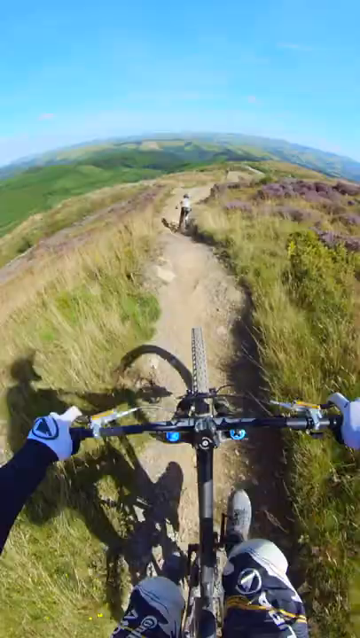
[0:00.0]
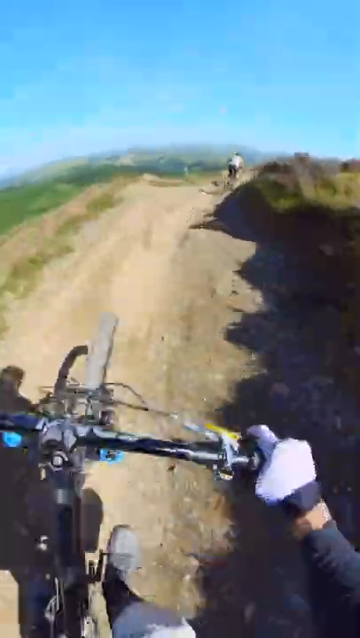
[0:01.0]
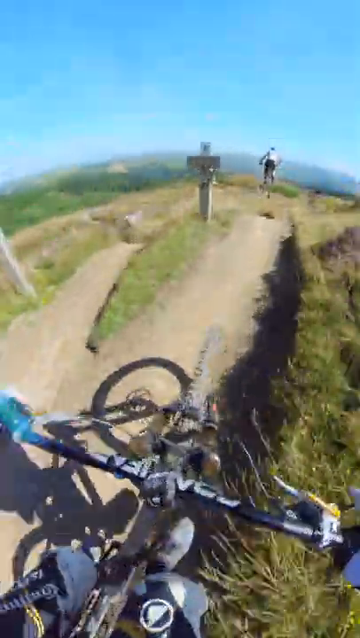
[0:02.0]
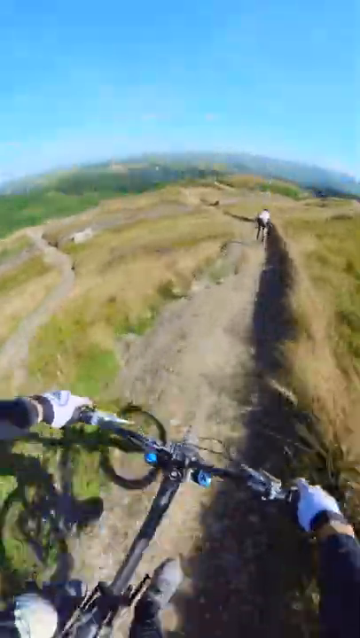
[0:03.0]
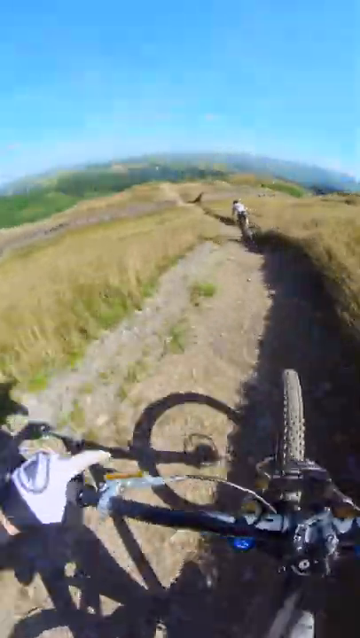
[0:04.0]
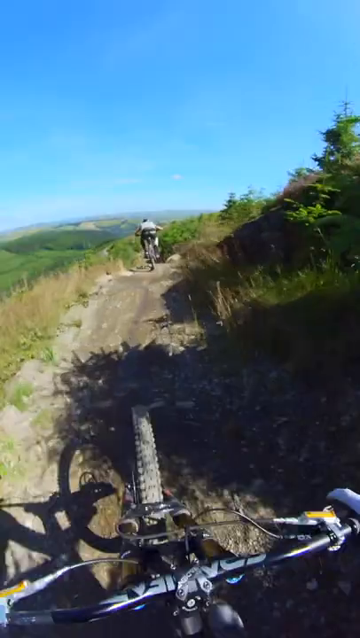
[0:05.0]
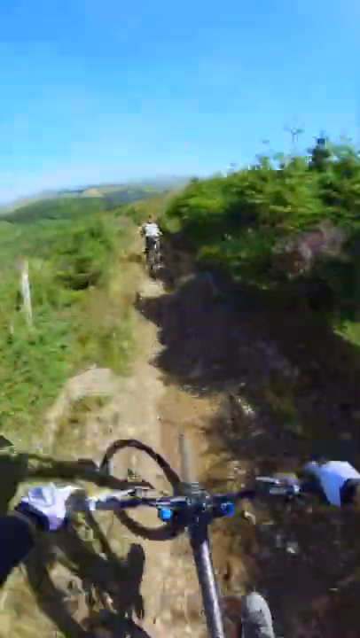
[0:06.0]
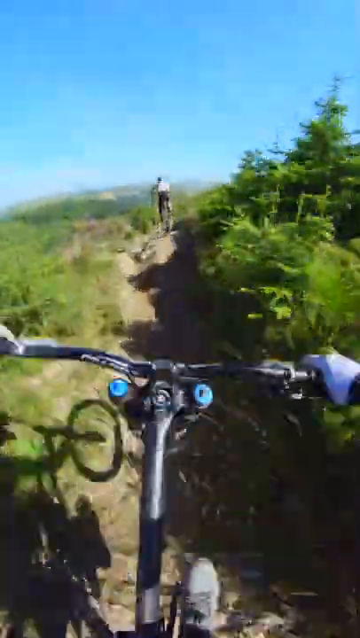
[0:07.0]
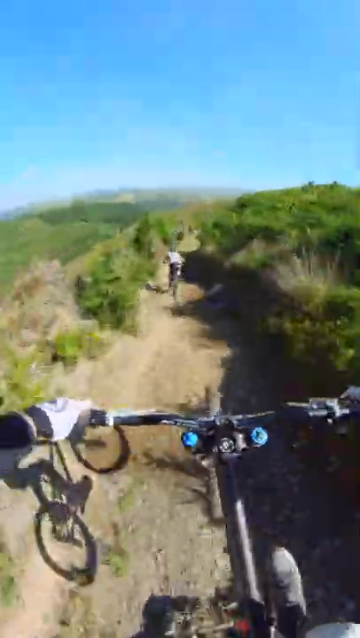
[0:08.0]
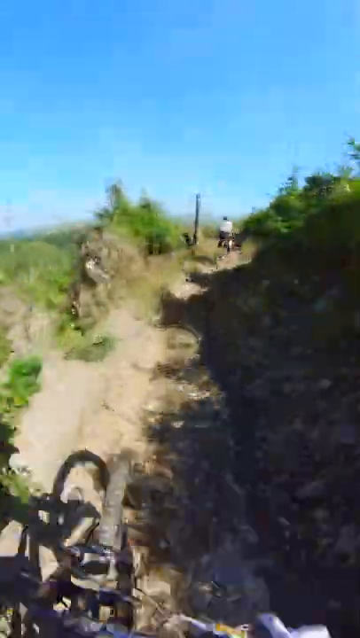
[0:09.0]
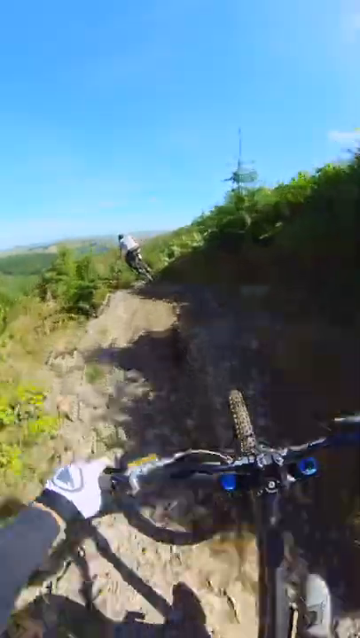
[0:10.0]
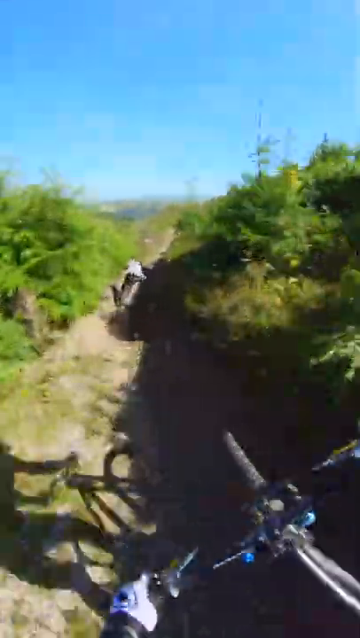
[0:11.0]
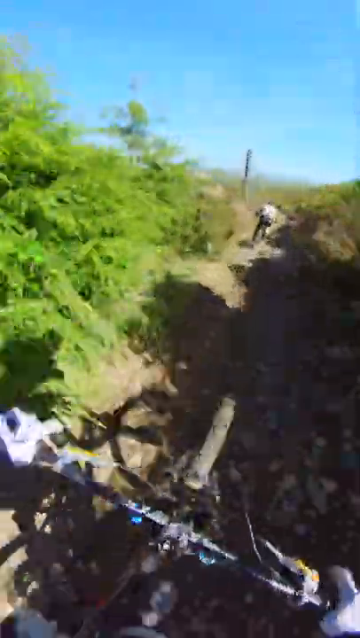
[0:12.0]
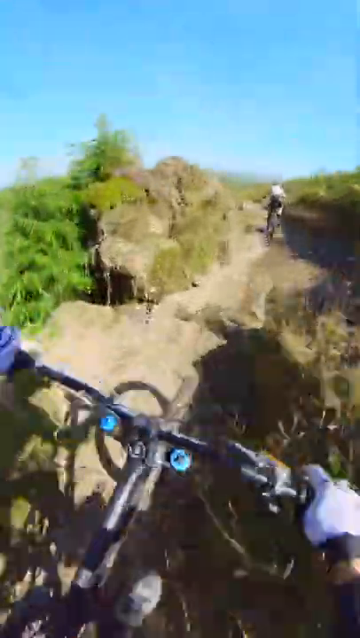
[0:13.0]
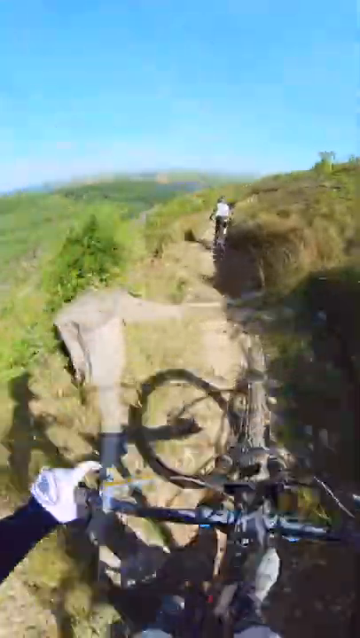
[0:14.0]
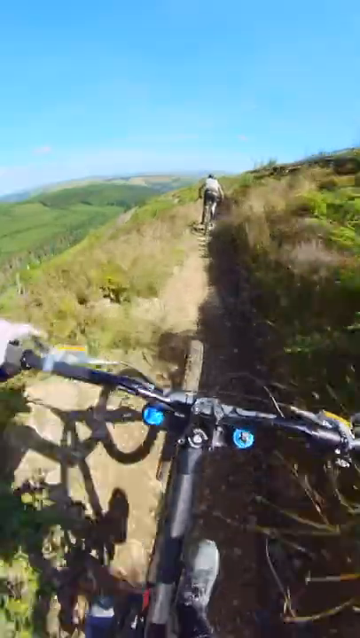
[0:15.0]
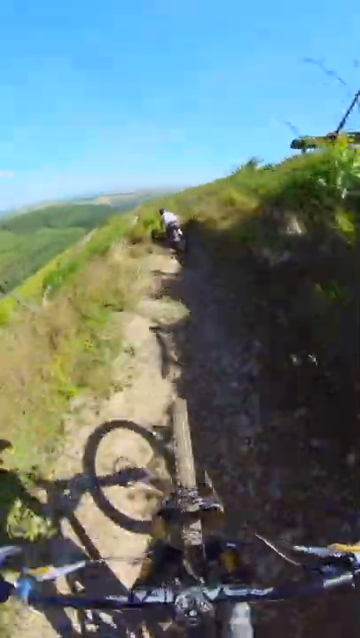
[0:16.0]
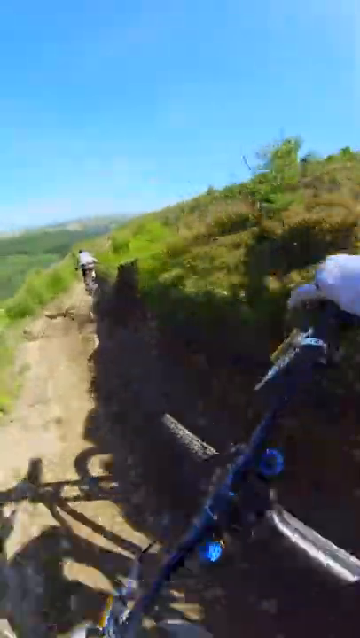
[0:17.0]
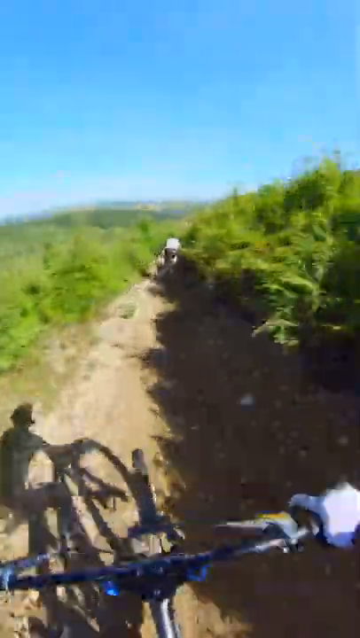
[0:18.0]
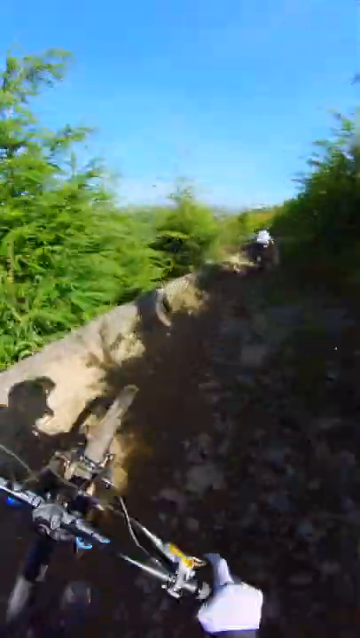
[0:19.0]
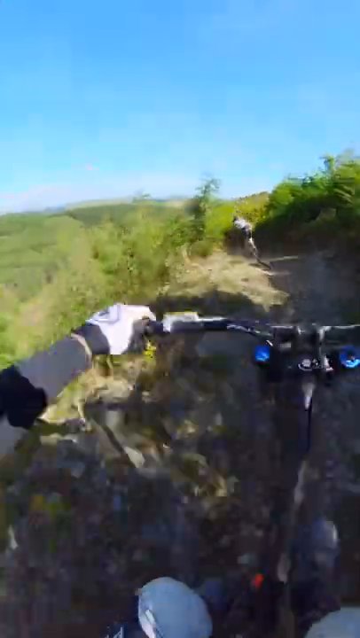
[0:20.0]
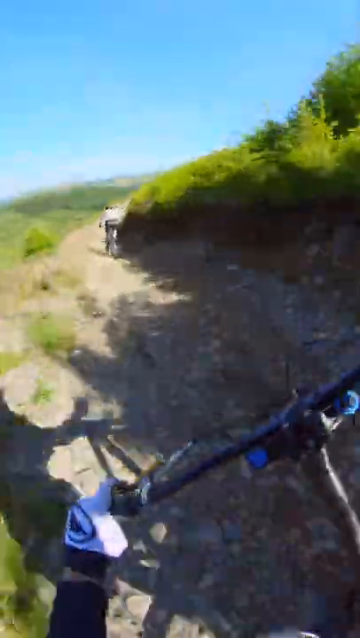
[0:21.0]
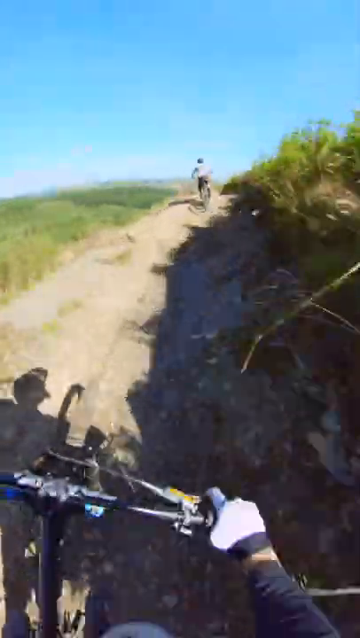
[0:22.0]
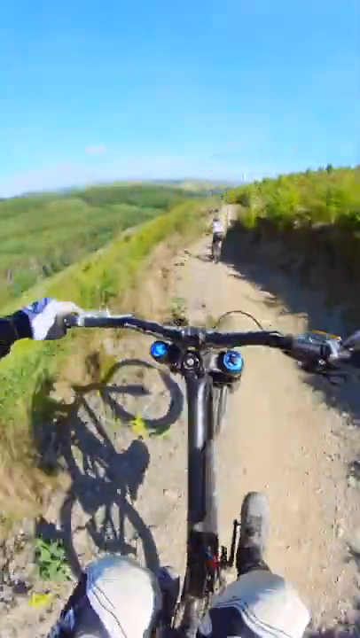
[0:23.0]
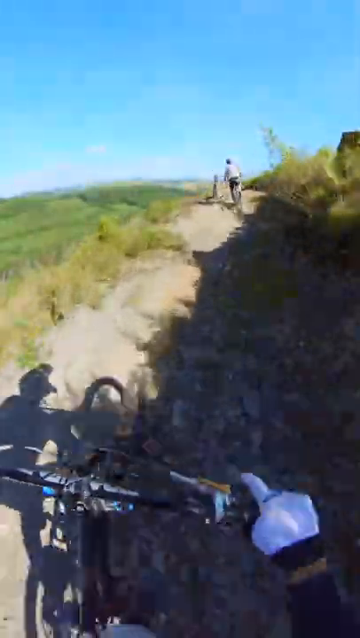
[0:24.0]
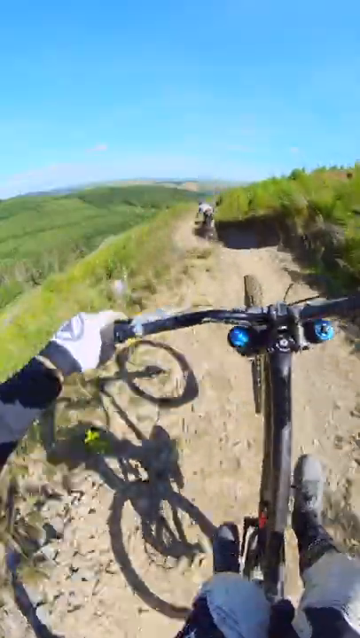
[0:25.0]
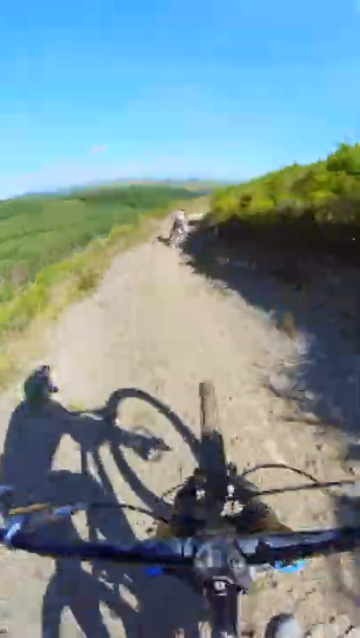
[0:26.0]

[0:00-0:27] A first-person view shows someone riding a bike, with the camera apparently held in the rider's hand. The title of the video reads "one-handed lens though" along with an emoji. The rider is on a kind of gravel trail in the countryside, with a lot of greenery around. Another rider is in front of him. The road is bumpy, and the bikes sort of get some air, lifting off the ground in some areas. The sky is blue as far as the horizon.